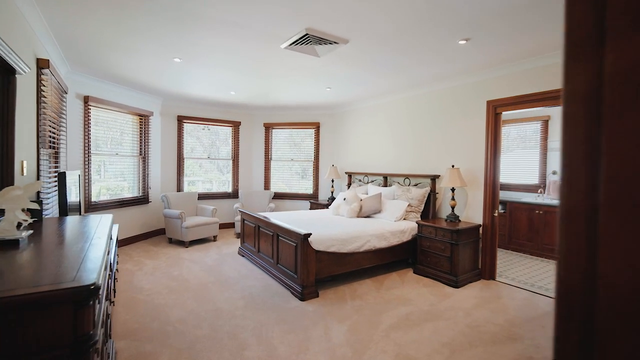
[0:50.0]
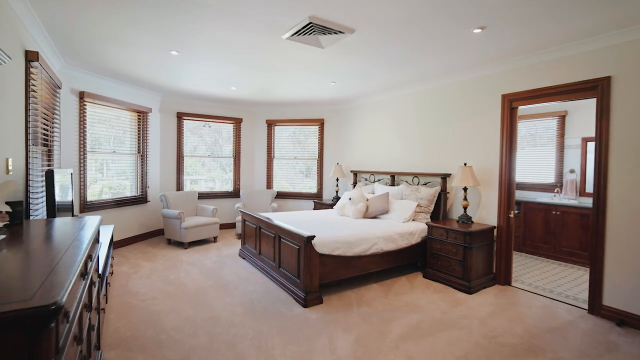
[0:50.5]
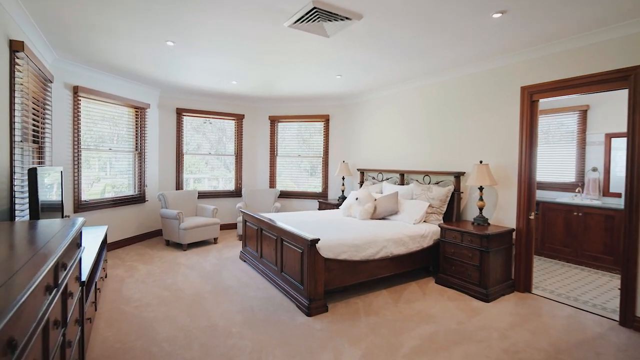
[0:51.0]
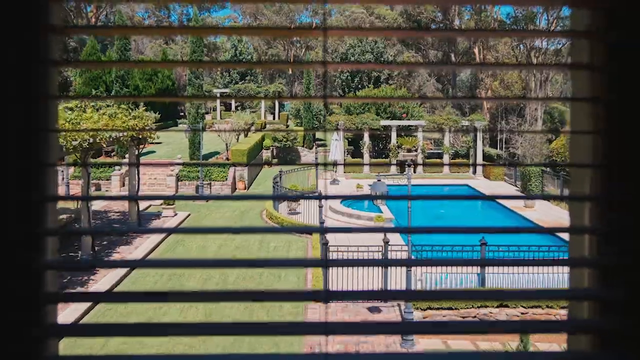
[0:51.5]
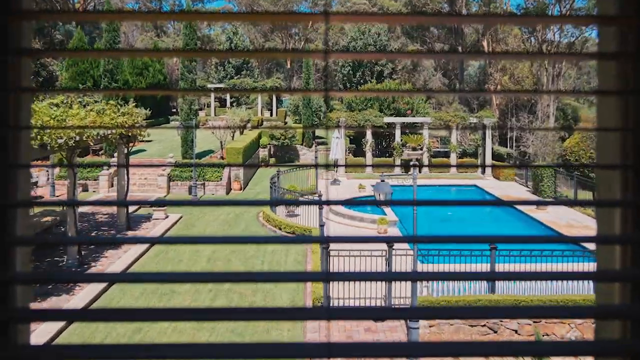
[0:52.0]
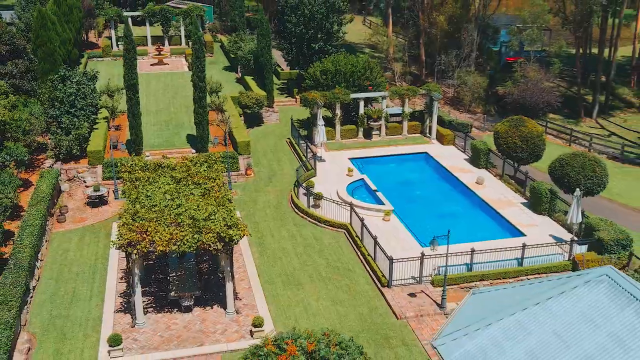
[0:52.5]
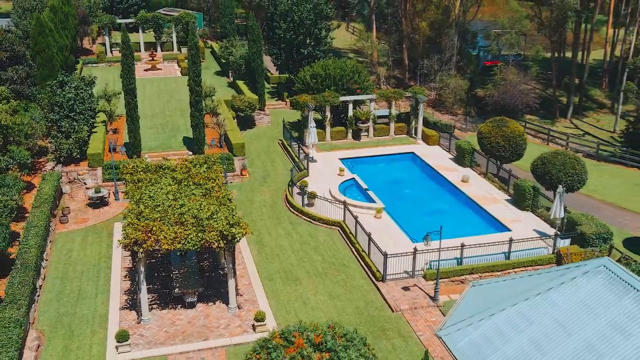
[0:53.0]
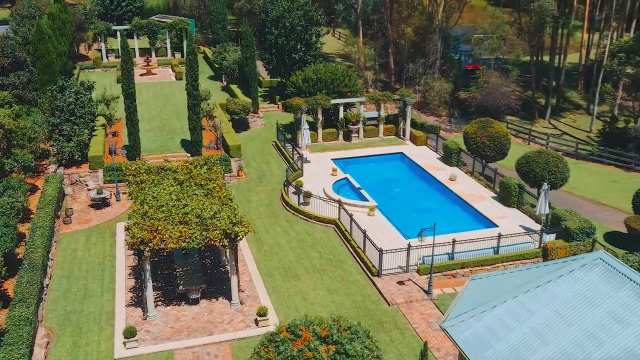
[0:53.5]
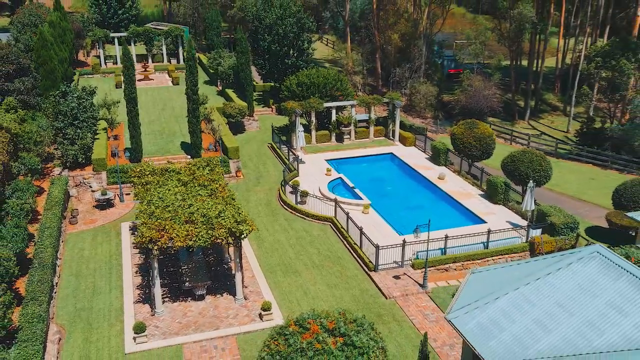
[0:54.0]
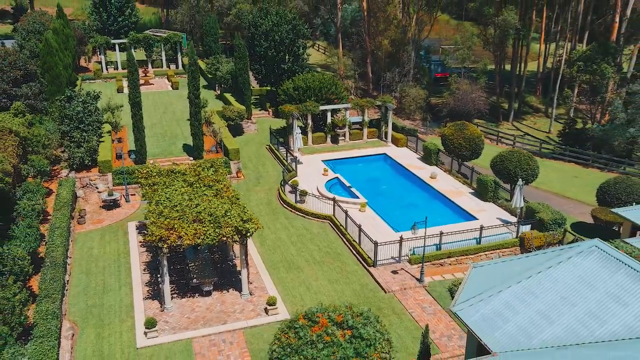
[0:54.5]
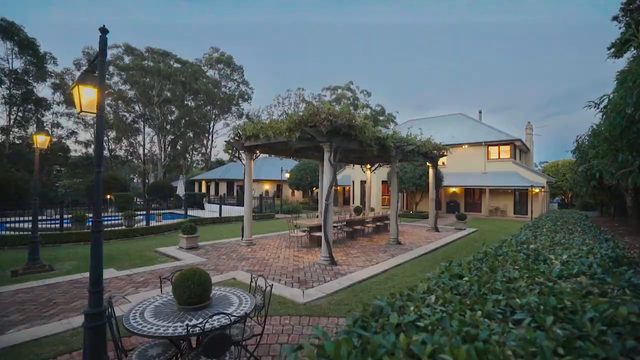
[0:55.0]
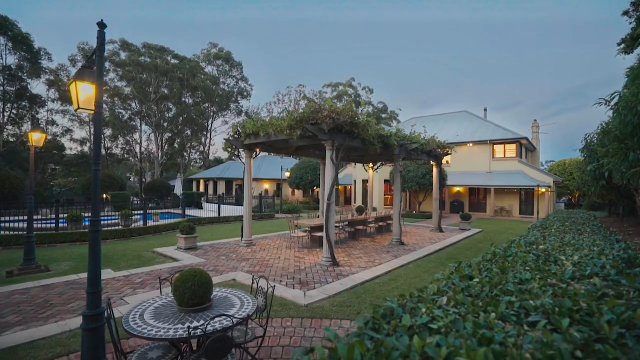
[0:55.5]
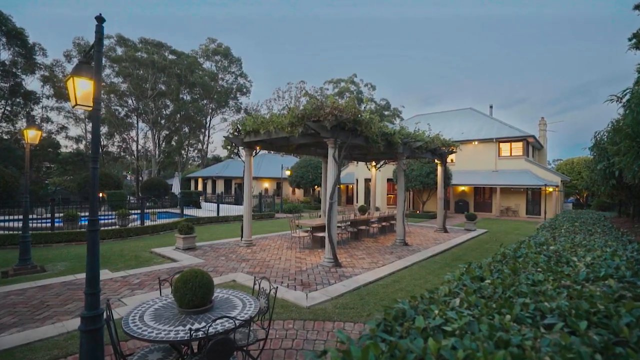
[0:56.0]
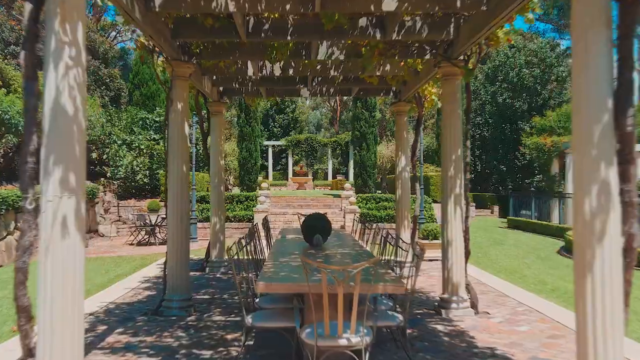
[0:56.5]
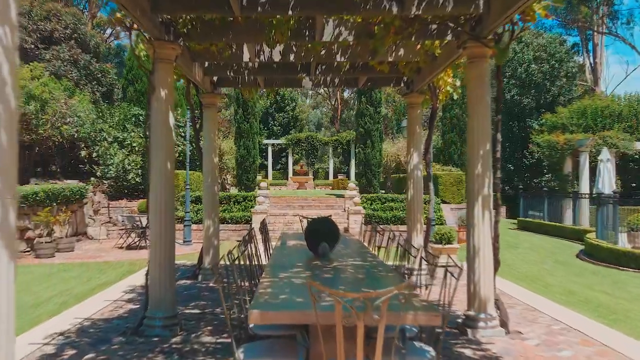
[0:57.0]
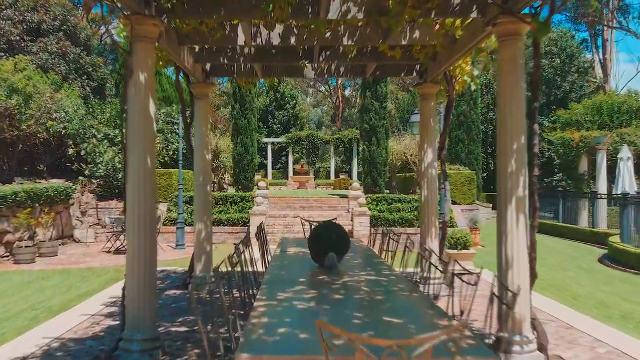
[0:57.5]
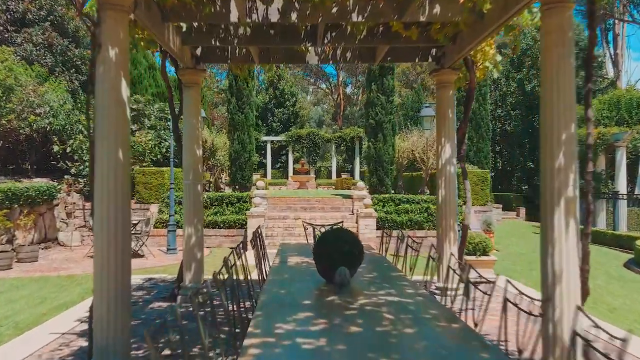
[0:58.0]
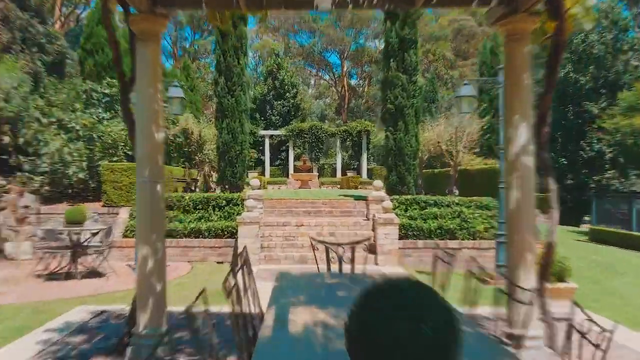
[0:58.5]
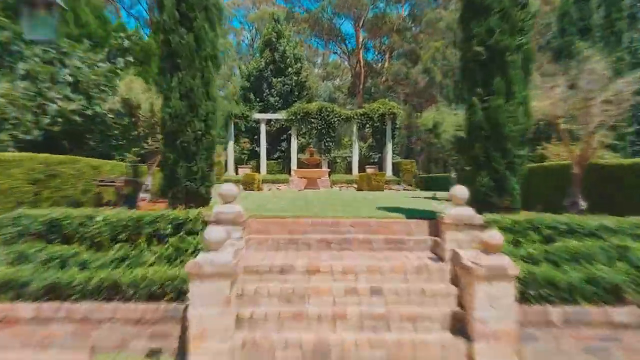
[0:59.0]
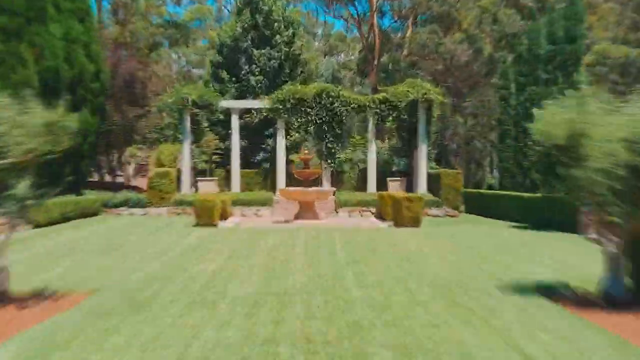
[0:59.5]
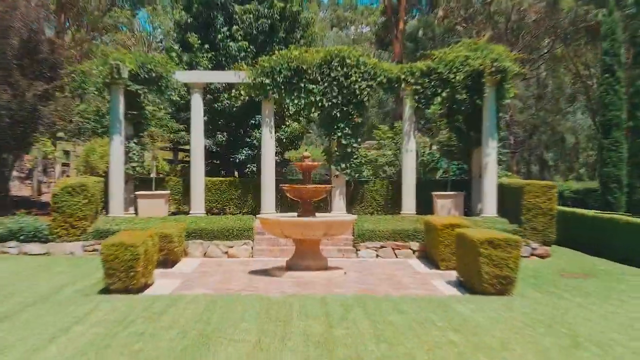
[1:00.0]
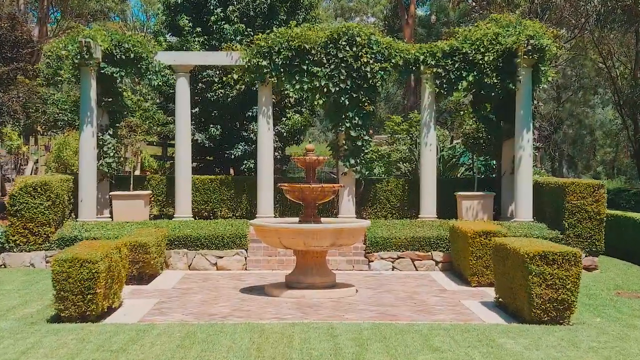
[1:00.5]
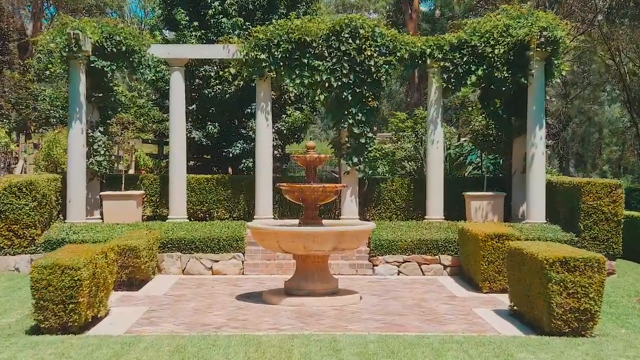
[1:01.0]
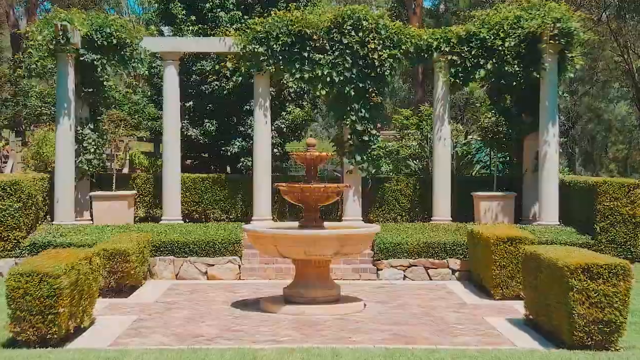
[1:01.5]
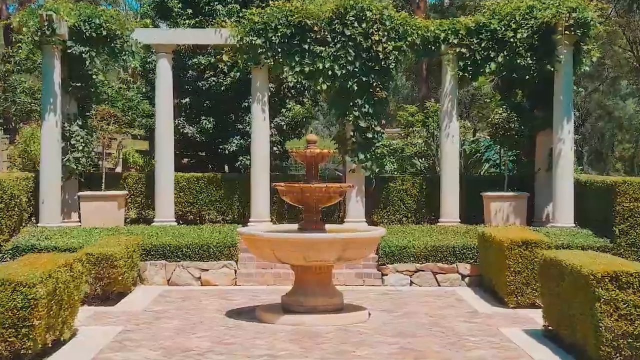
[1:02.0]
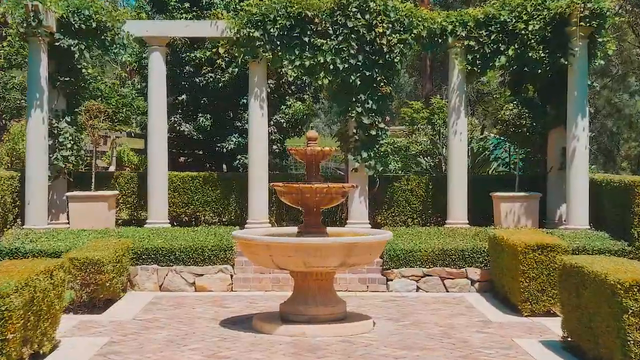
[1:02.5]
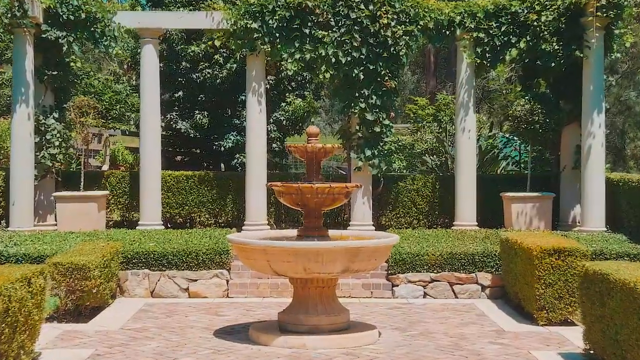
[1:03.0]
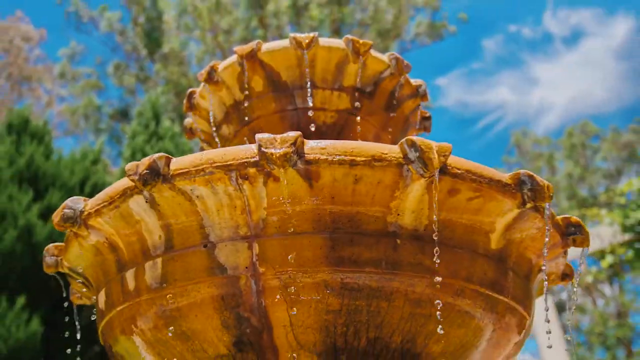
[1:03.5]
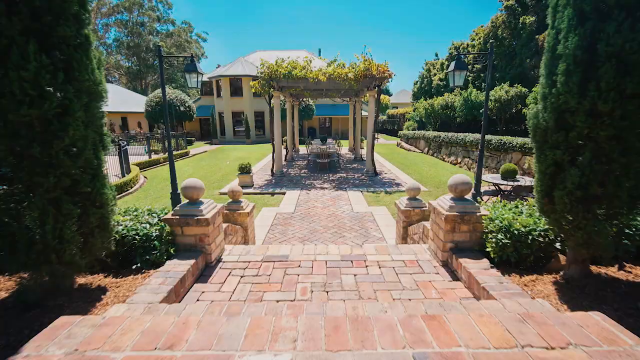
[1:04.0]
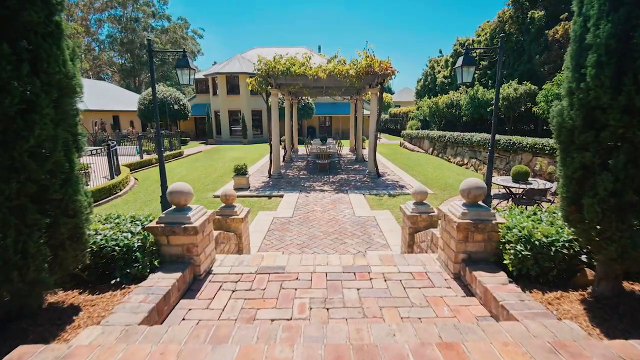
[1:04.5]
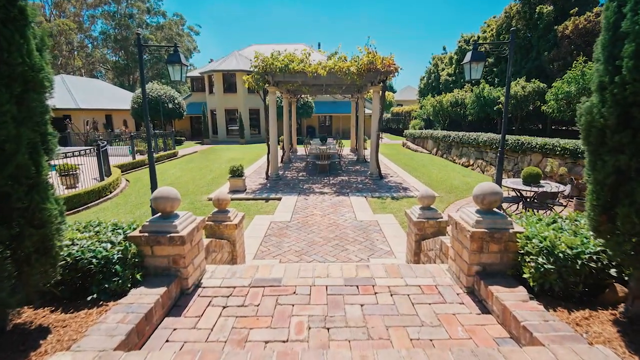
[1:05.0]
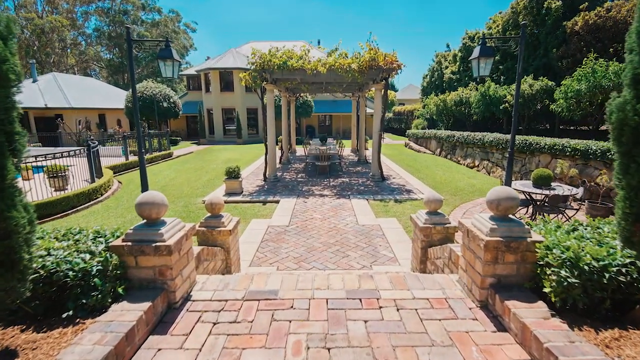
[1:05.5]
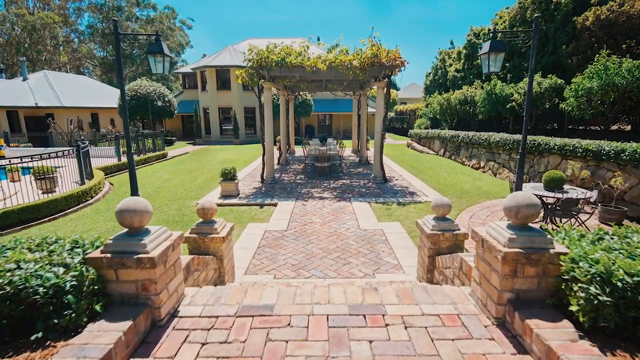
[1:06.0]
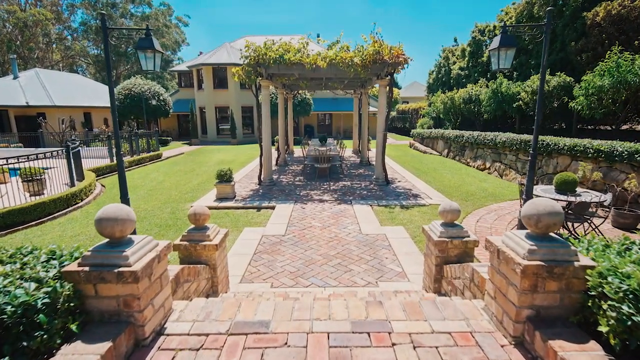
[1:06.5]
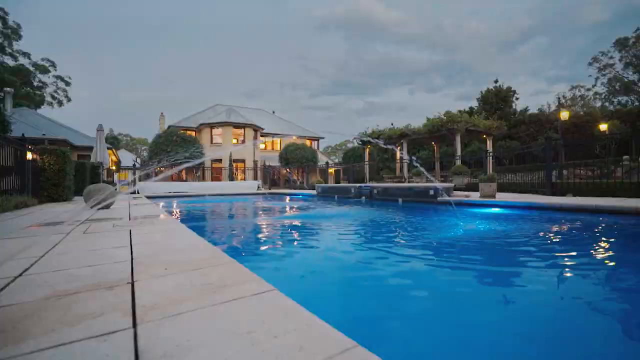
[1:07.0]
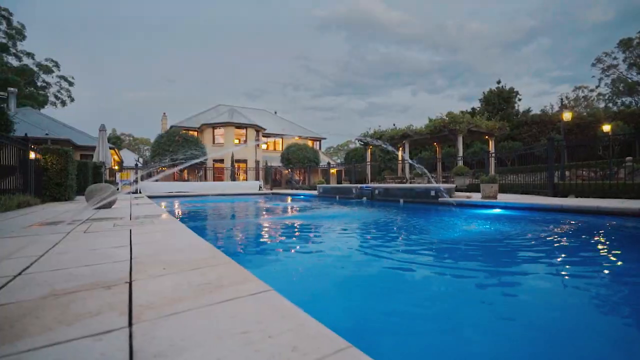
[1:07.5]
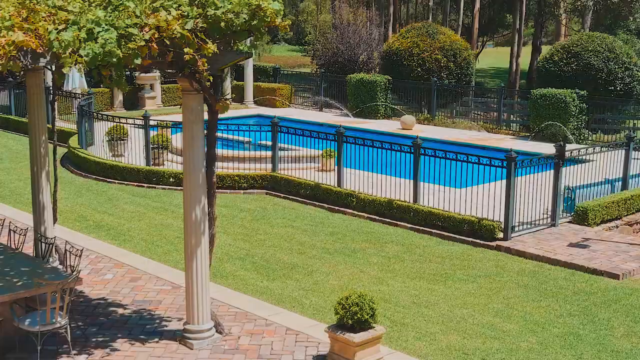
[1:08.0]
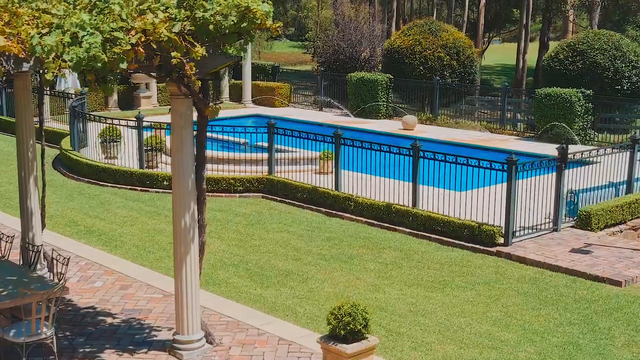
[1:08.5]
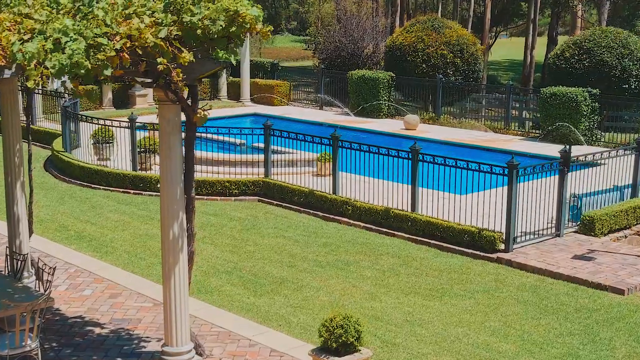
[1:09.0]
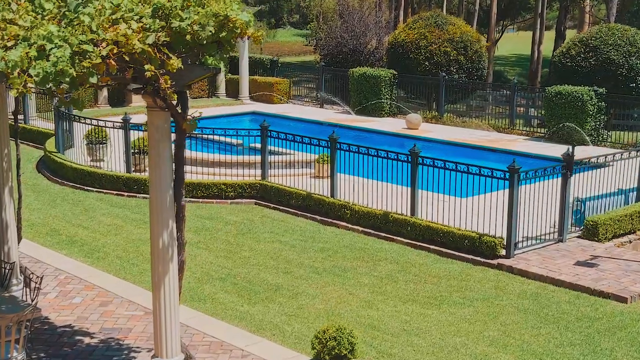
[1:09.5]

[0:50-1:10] After the bedrooms, various areas of the home are shown. The garden is very elaborate, with a feel somewhat like the French Renaissance. The gate around the pool has a style that almost leans toward romanticism, and the plants are shaped in ways reminiscent of Italy or the south of France, such as the Tuscany area. The outside is very green, with few if any flowers; there may be some far in the distance near a water fountain and possibly near the pool, but it is hard to tell because the video is a bit blurry. Cobblestones and cement are used extensively, in a style that seems to lean toward 17th-century upper-class Europe.